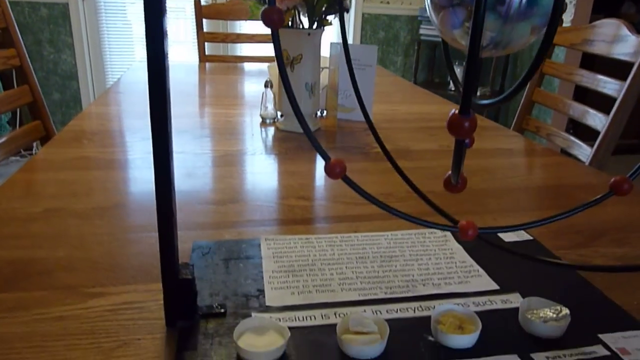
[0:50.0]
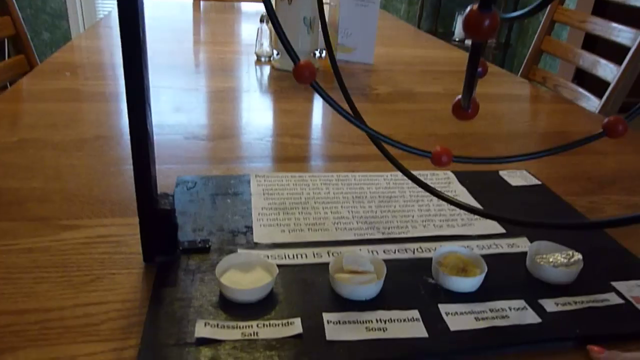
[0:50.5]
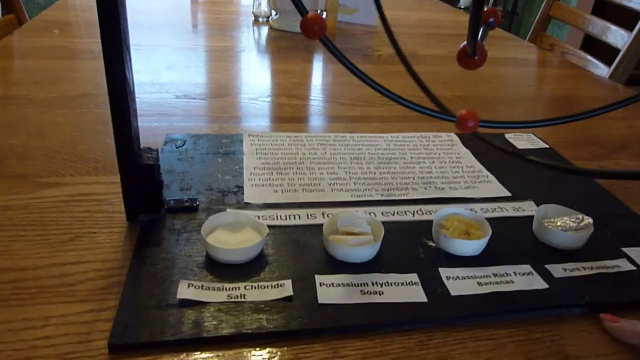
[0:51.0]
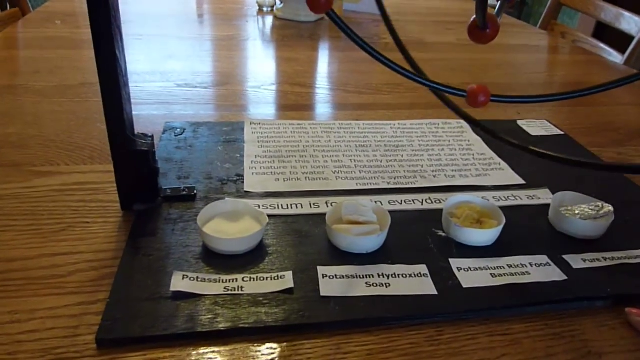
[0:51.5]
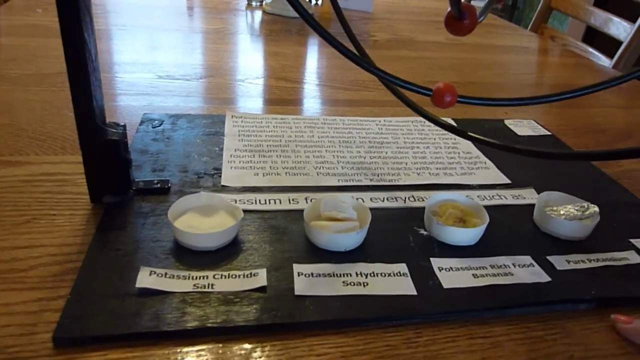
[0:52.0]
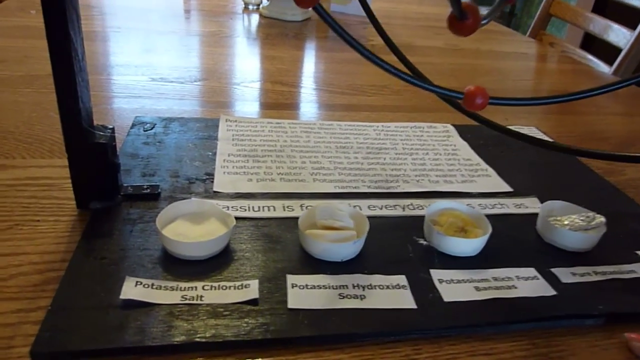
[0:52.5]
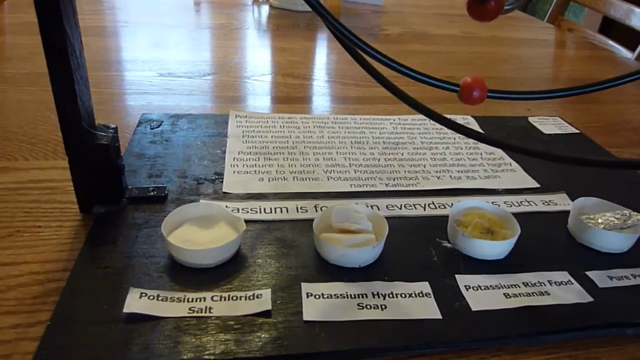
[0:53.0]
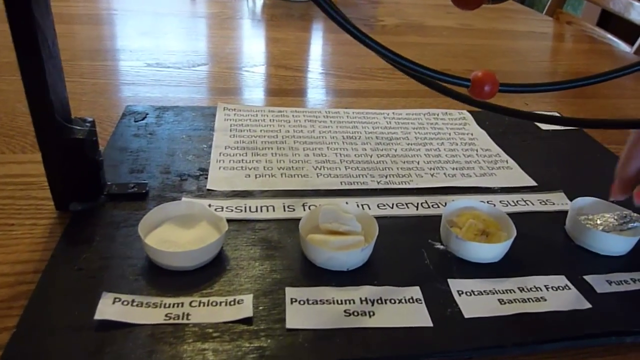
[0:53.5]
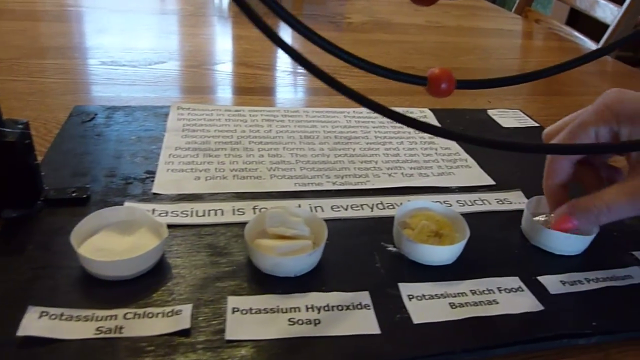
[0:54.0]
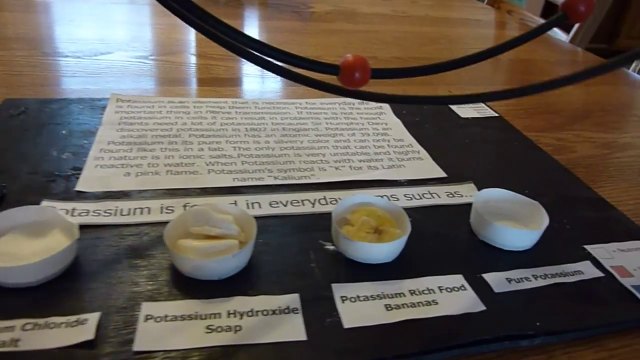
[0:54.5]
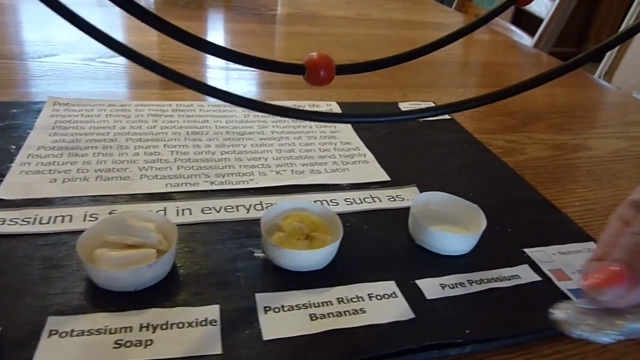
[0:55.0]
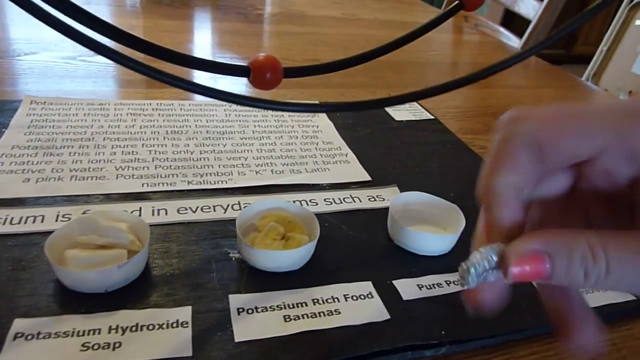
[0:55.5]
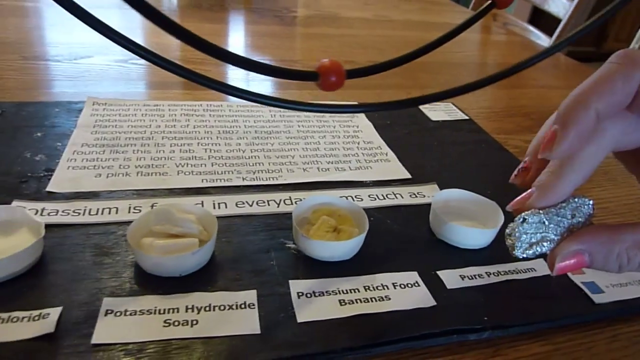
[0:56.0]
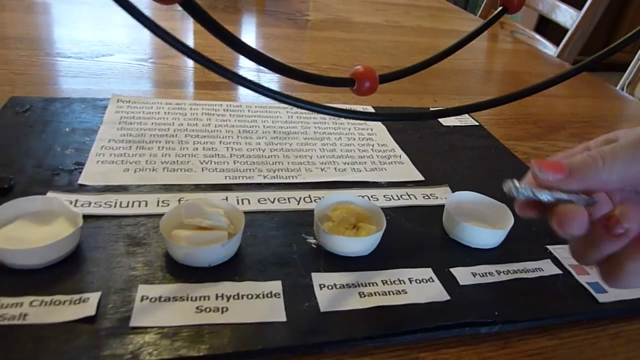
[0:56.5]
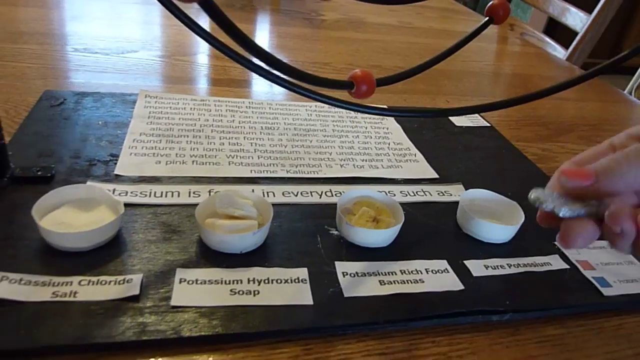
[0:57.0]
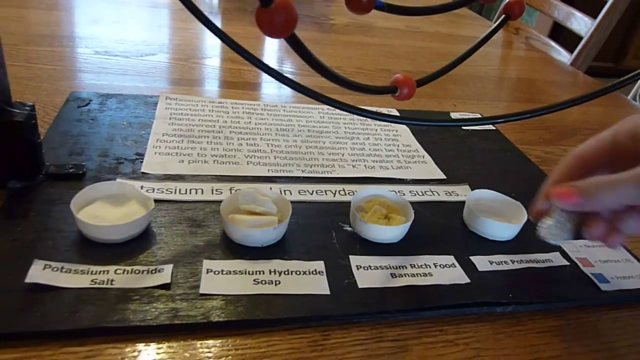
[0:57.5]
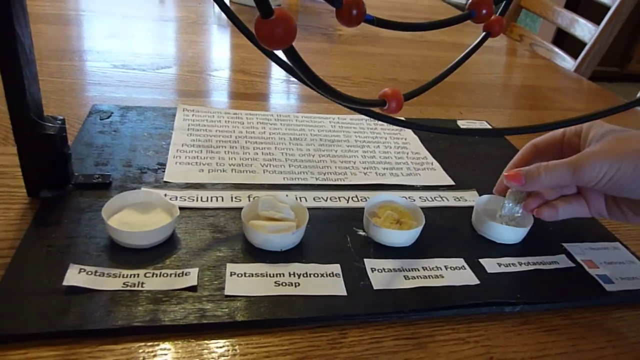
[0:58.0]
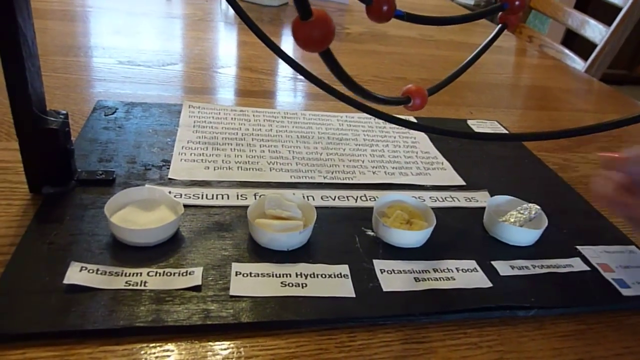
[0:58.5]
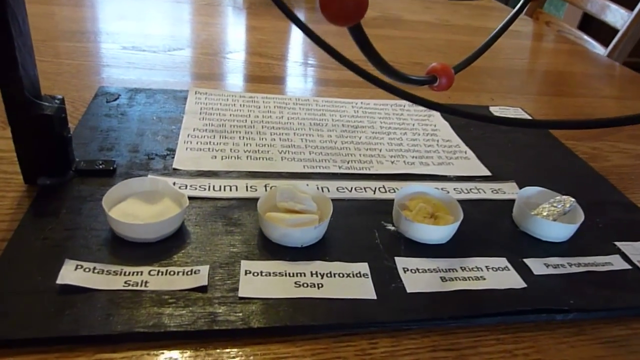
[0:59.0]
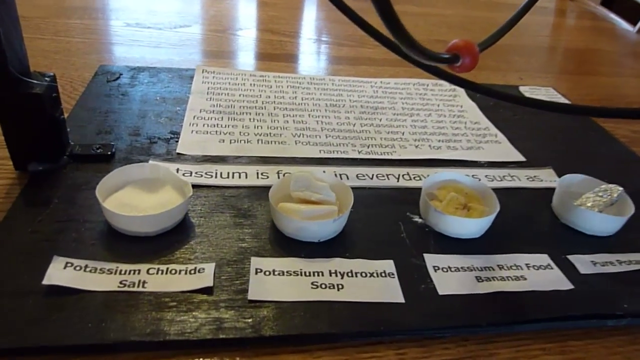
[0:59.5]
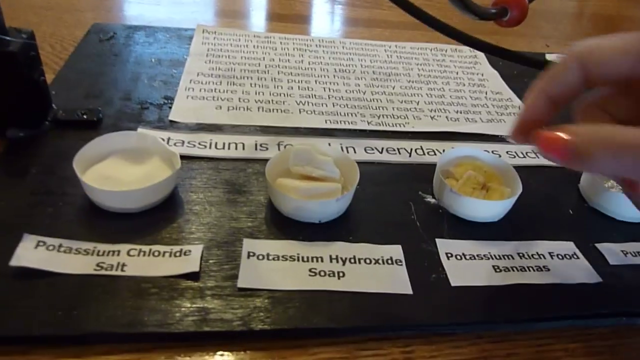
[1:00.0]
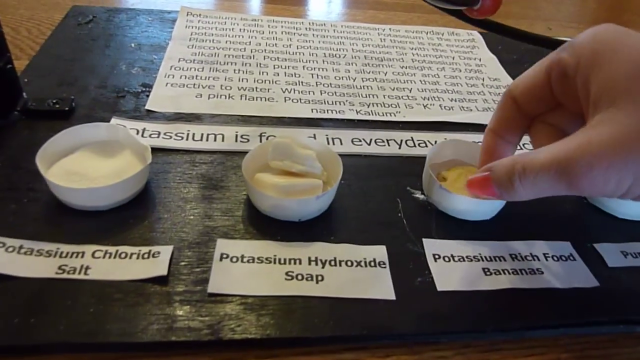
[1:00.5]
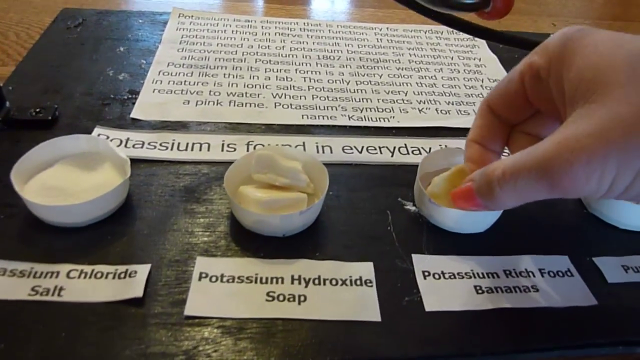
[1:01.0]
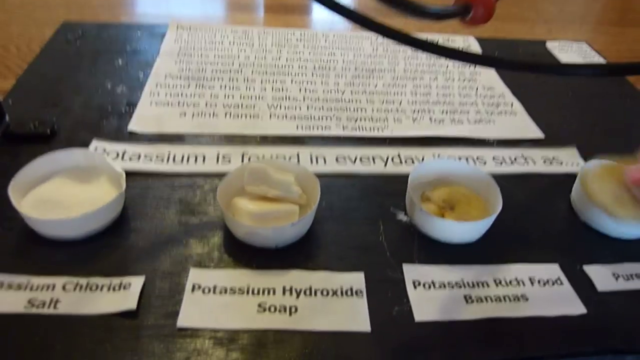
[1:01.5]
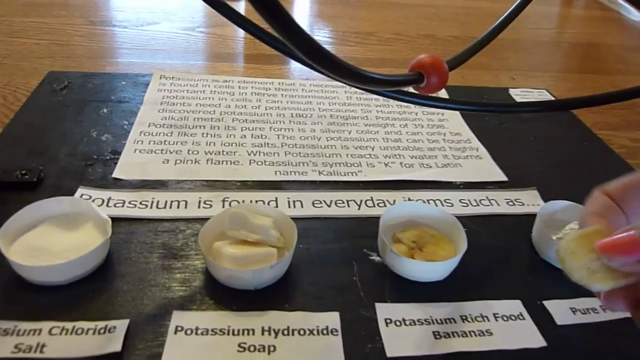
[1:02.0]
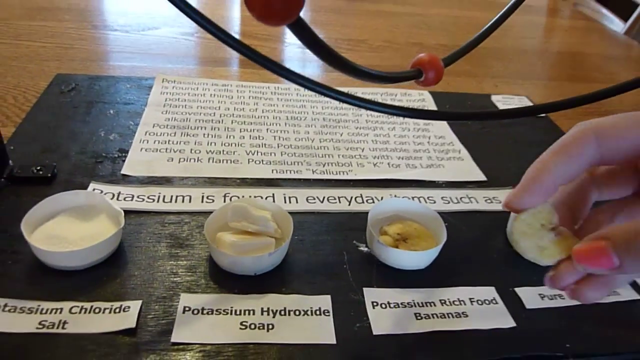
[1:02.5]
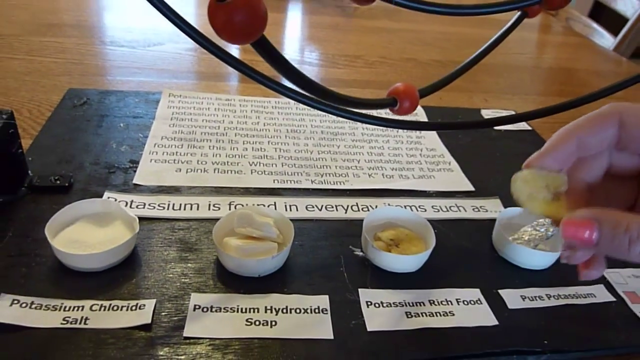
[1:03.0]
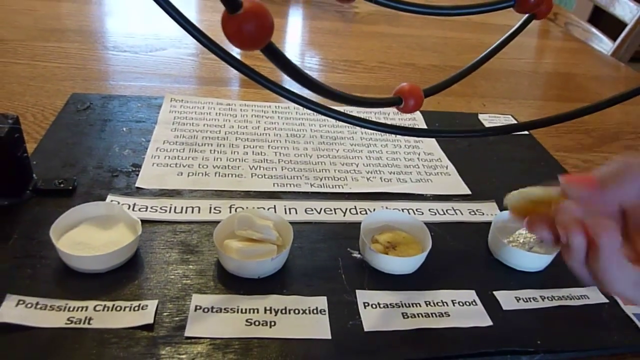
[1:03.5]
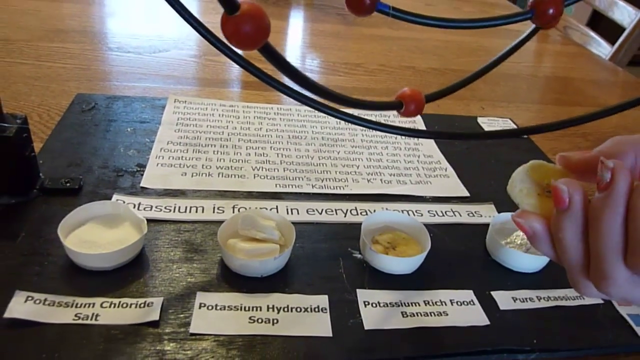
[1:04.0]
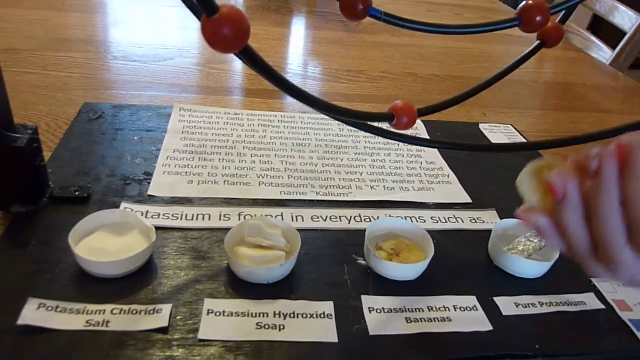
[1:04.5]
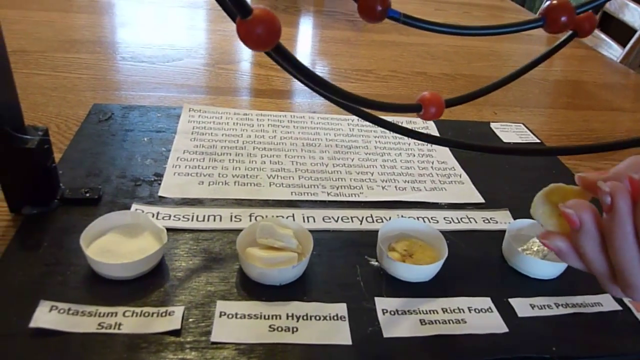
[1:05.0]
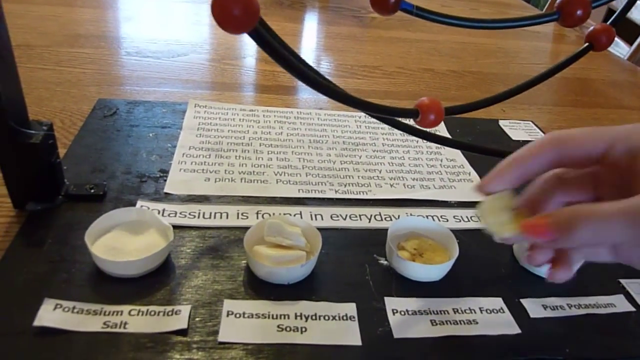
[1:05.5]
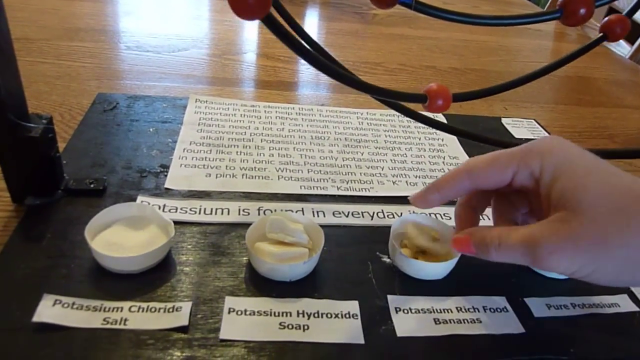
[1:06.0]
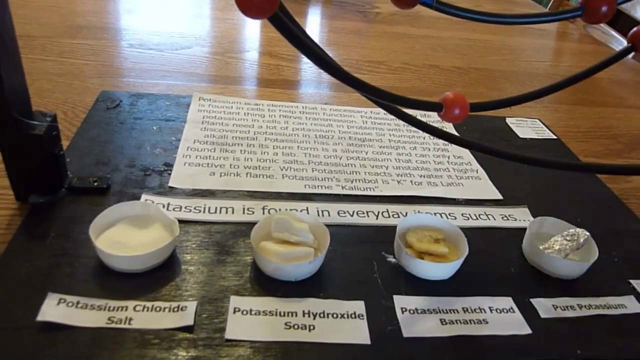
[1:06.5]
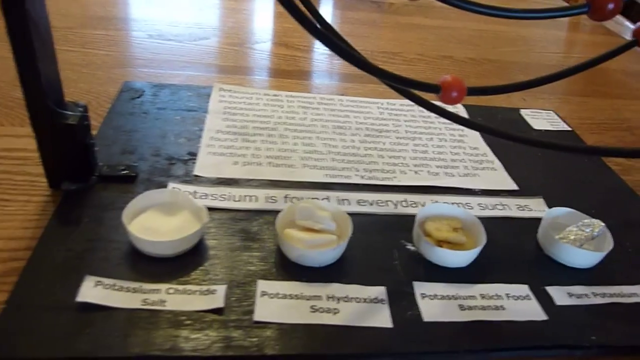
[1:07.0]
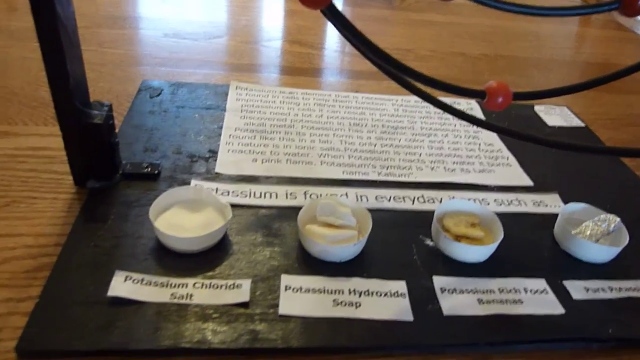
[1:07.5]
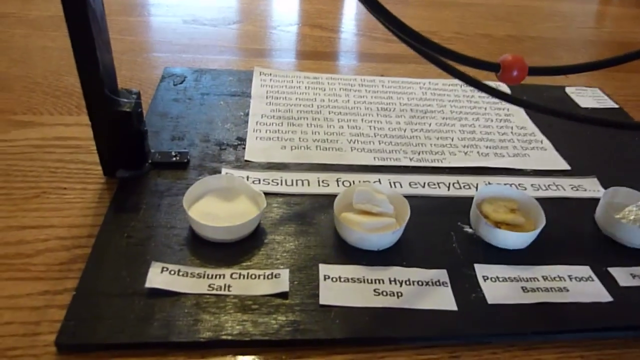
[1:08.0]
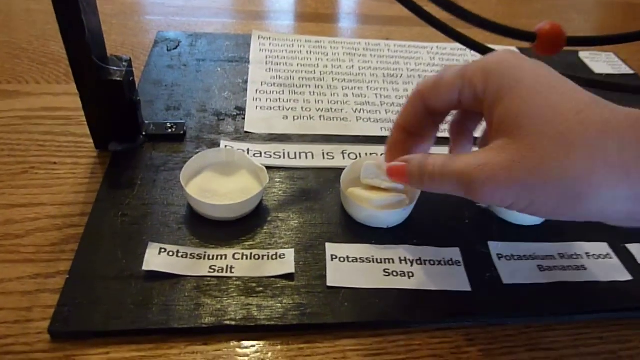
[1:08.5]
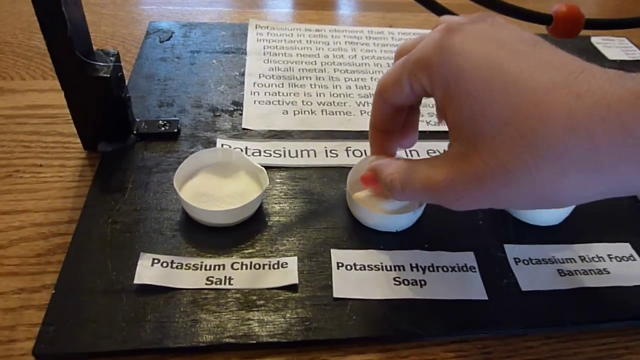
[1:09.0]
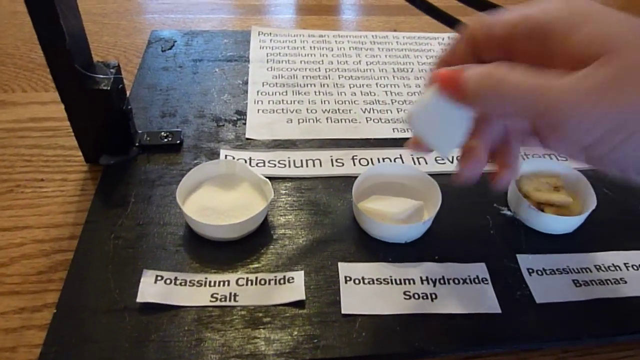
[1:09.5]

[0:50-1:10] A closer view shows the small models at the bottom. The first one on the left is labeled "potassium chloride salt", the second "potassium hydroxide soap", the third "potassium rich food bananas", and the fourth "pork potassium". Right above them the text reads "potassium is found in everyday items such as".